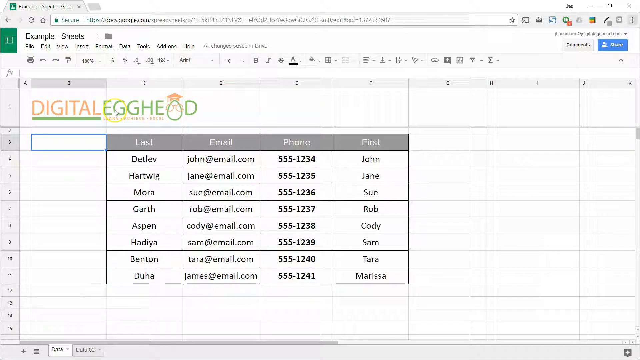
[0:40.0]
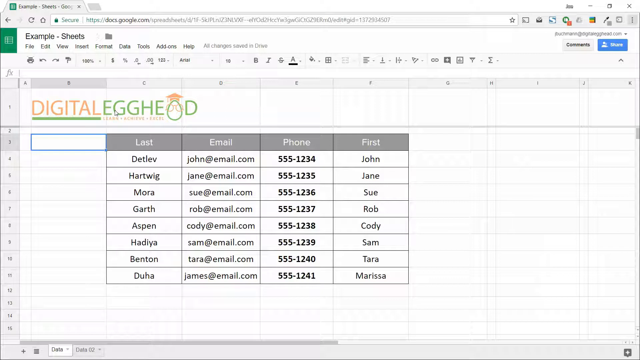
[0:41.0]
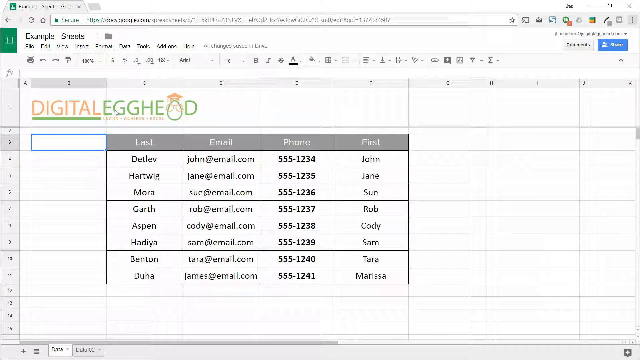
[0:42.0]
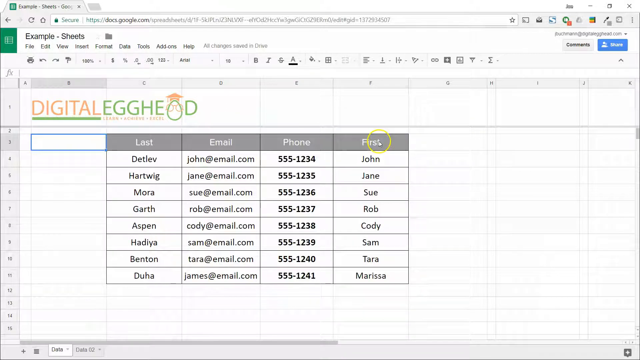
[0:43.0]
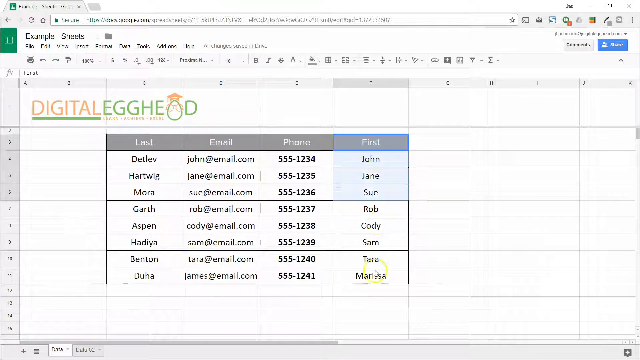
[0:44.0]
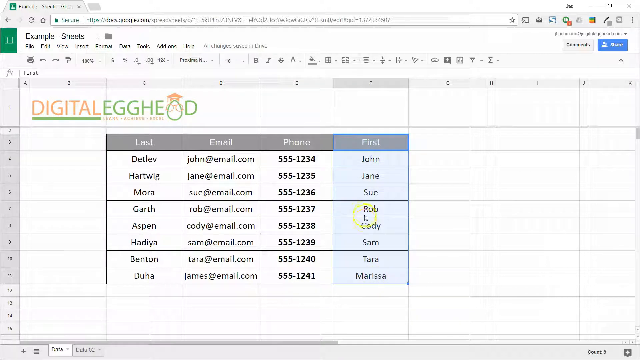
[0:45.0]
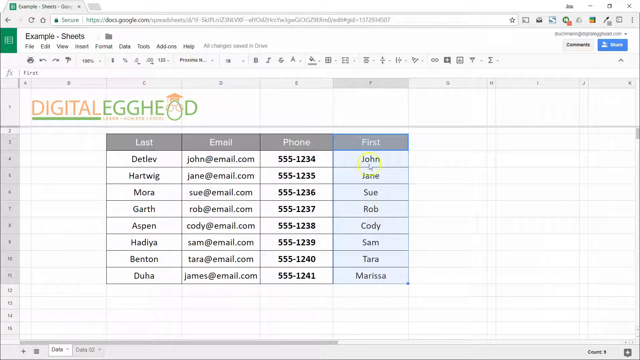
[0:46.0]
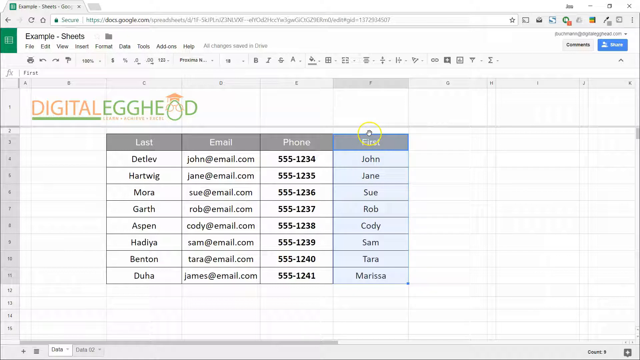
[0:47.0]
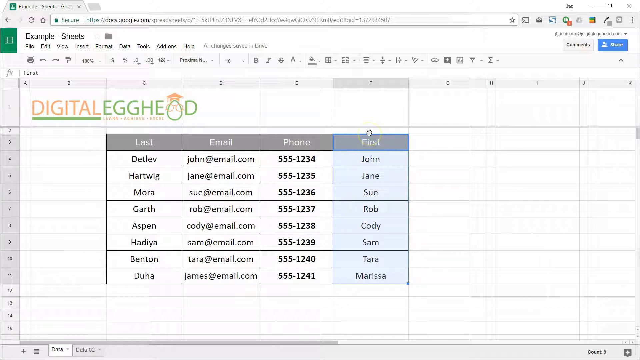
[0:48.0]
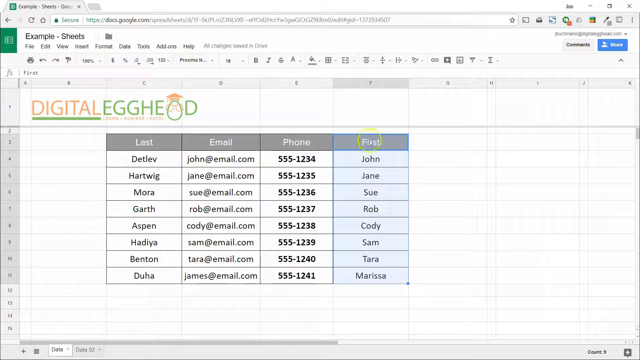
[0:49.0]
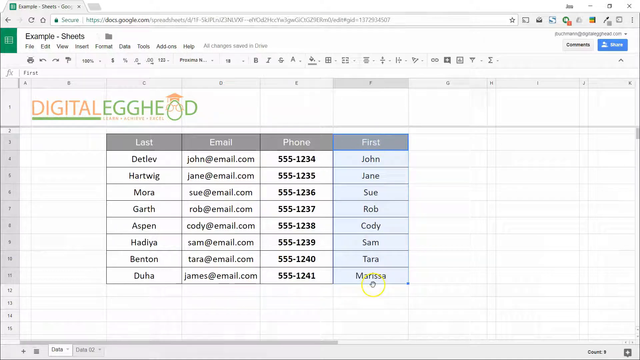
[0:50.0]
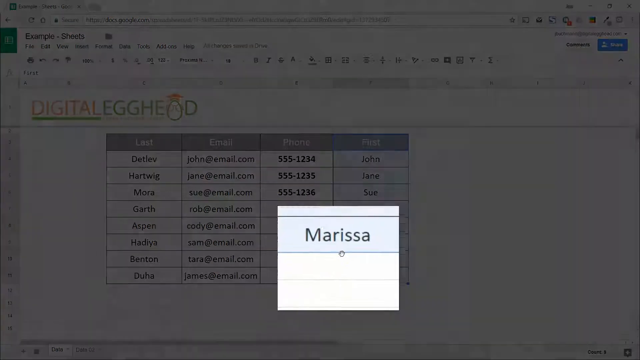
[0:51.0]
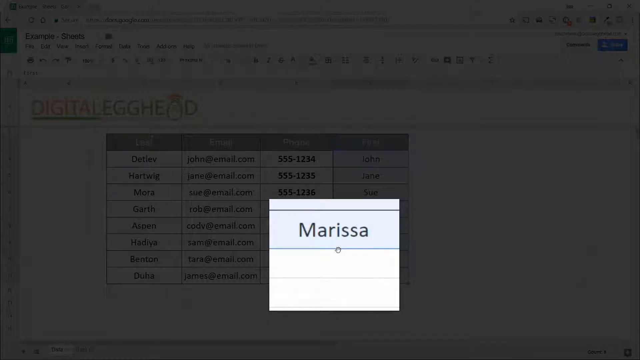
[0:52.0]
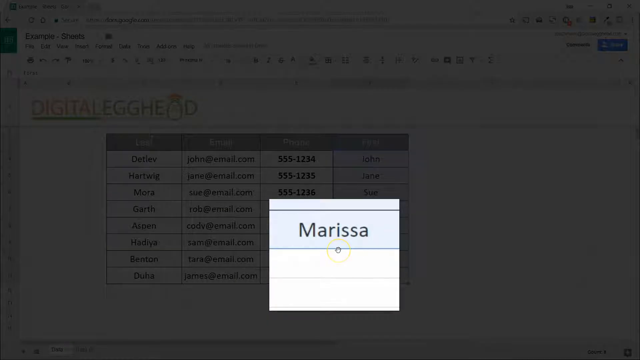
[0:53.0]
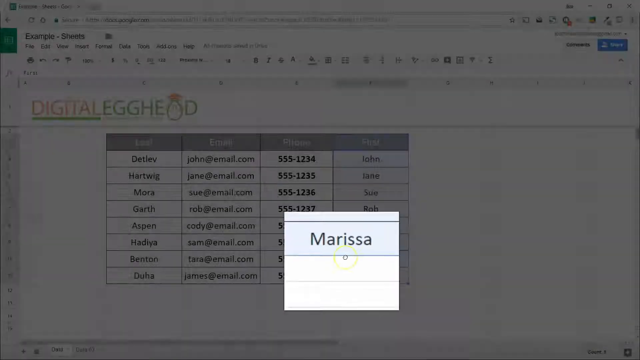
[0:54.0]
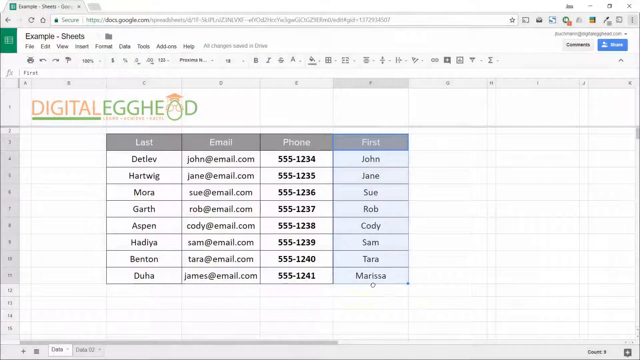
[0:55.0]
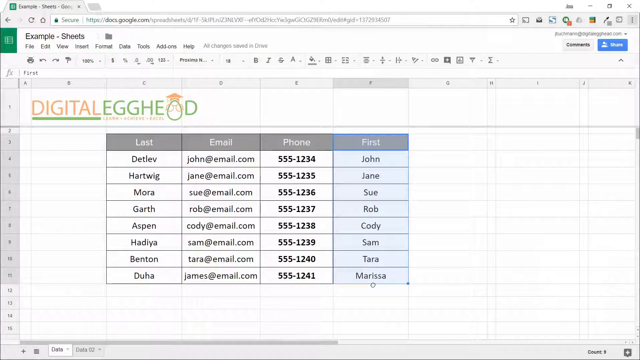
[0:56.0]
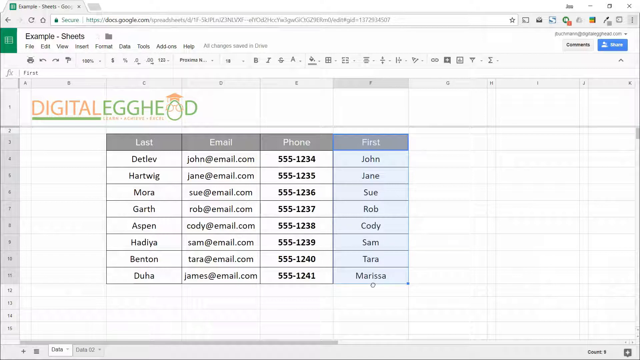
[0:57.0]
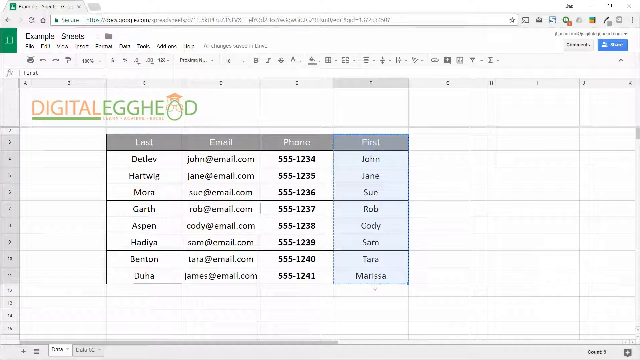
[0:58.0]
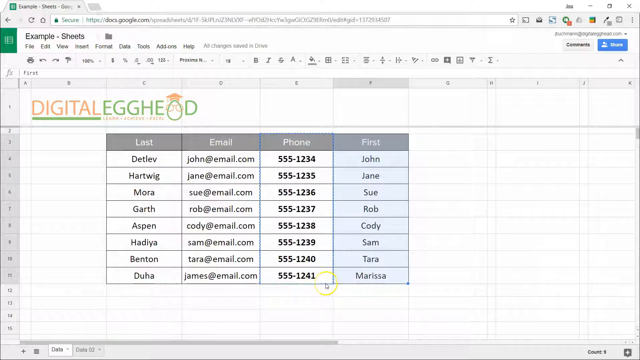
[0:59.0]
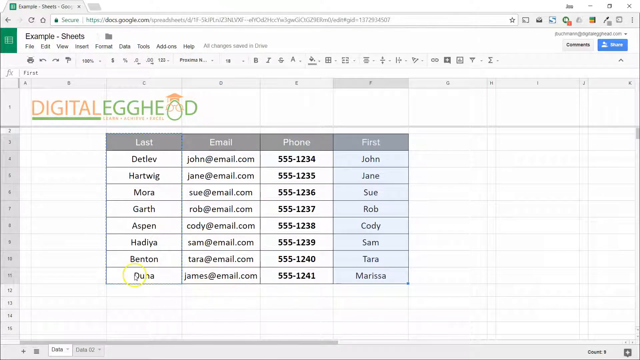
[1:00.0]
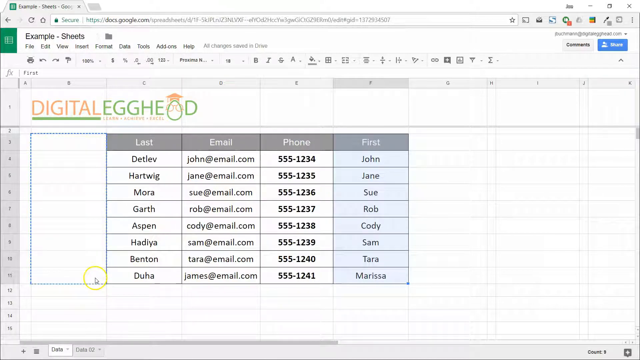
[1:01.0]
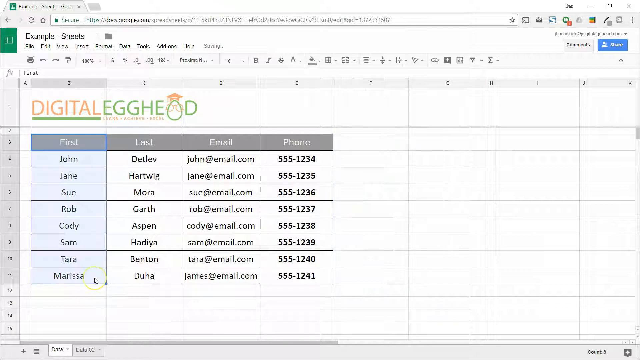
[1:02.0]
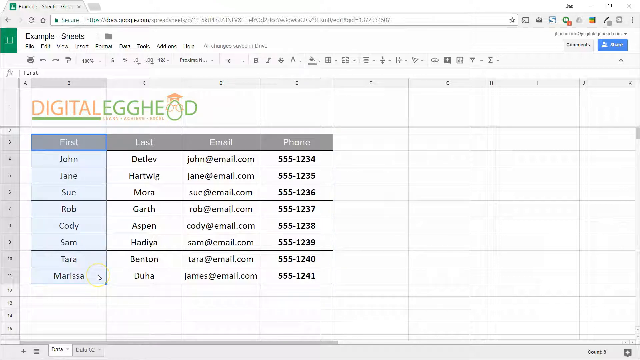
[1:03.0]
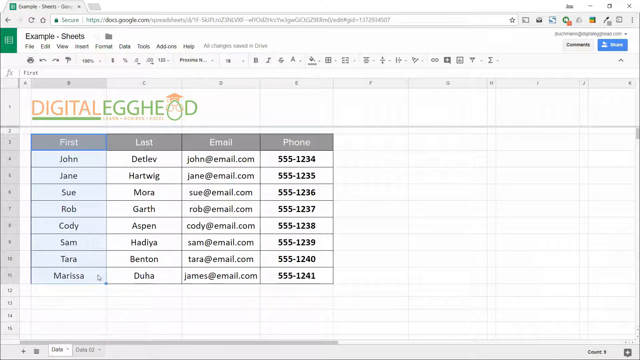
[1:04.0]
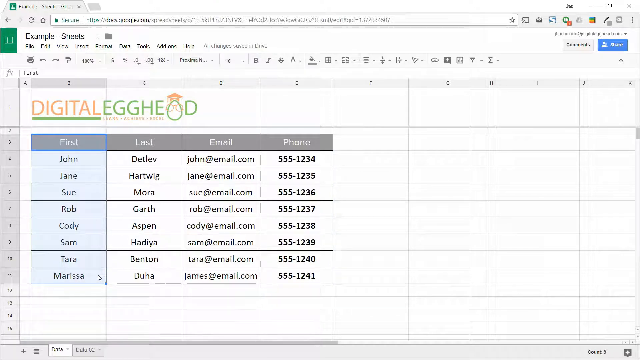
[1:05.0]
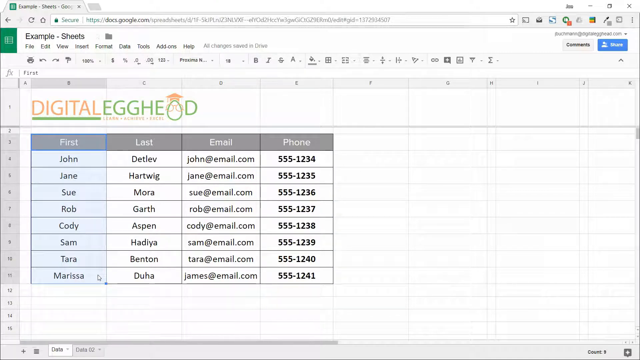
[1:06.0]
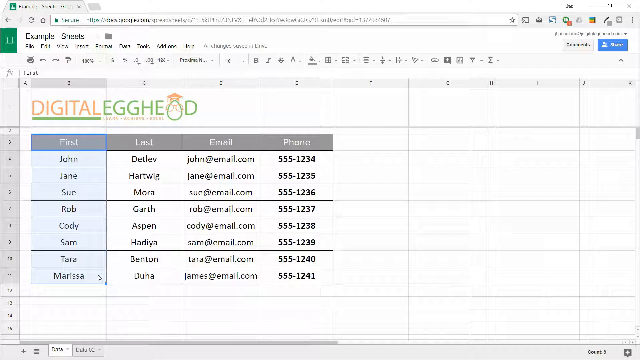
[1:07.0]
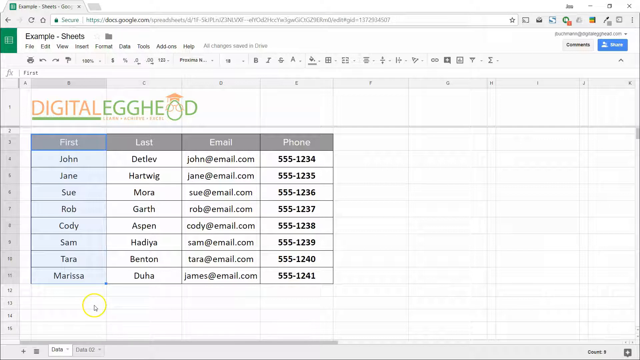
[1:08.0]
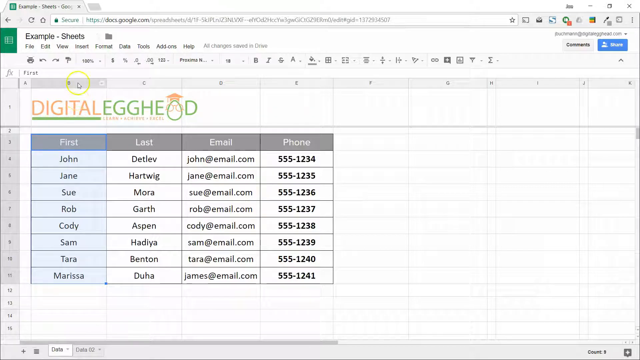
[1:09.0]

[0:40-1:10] A screen is pulled up where someone appears to be working on a website. At the top it says "example sheets," and below that the main screen says "Digital Egghead." A chart on the screen lists options across the top, "last," "email," "phone" and "first," with something listed below each one. Someone goes through the different options on the screen and seems to be changing some of the ways the information is listed. They pull up a specific name, "Marissa," click on it and place it back into the row it was in, and the chart changes in that area.